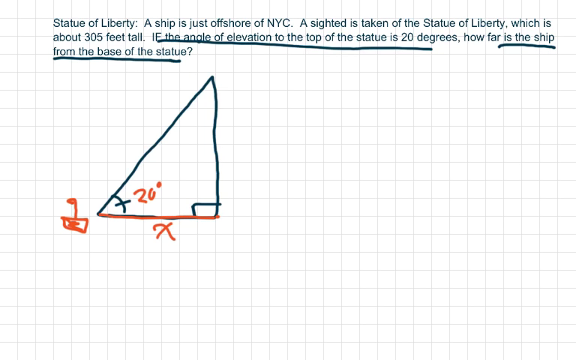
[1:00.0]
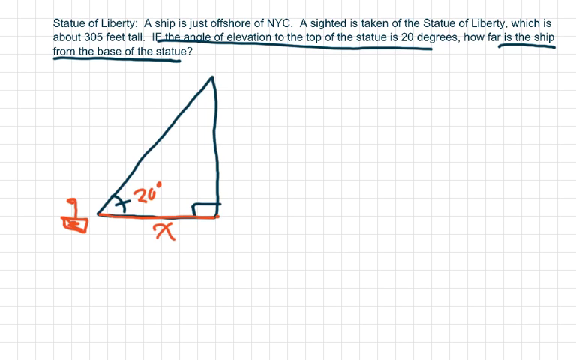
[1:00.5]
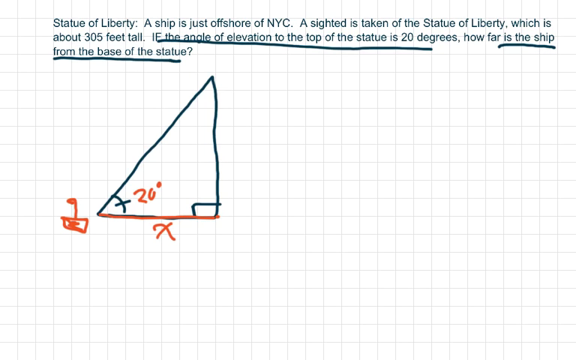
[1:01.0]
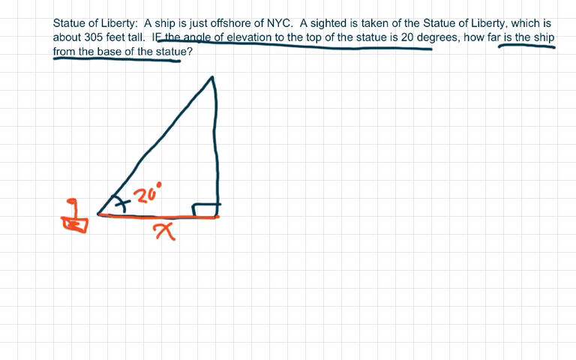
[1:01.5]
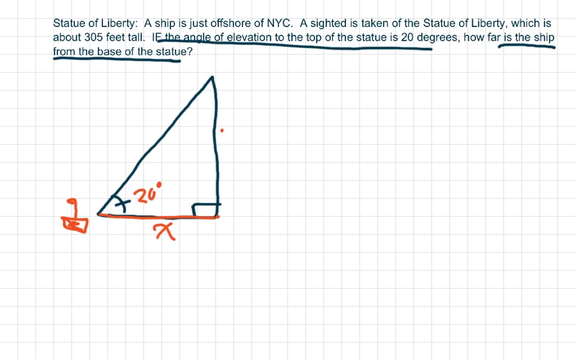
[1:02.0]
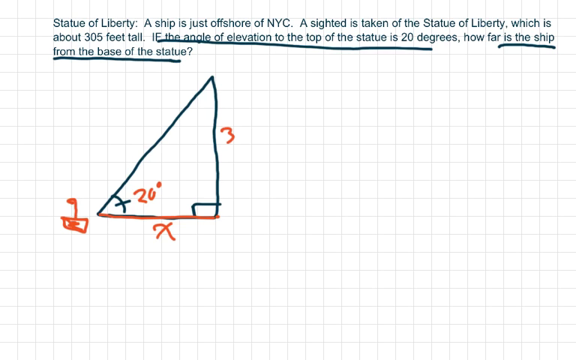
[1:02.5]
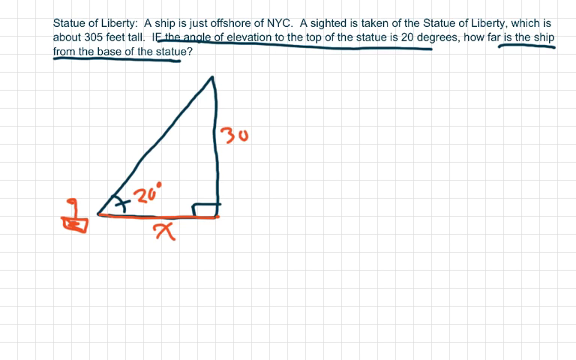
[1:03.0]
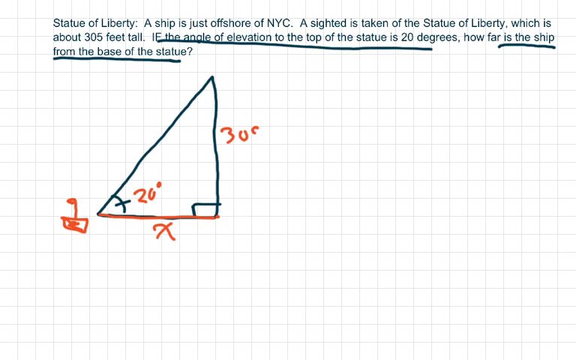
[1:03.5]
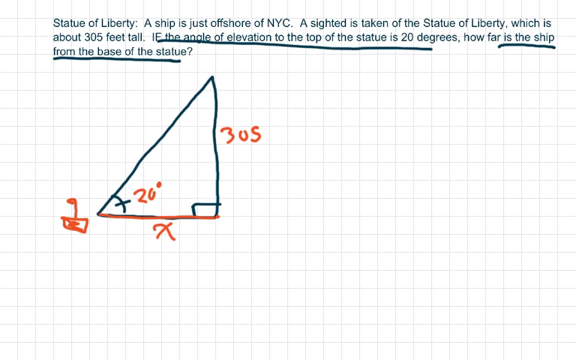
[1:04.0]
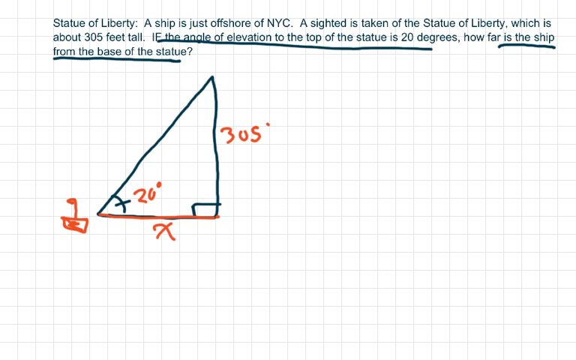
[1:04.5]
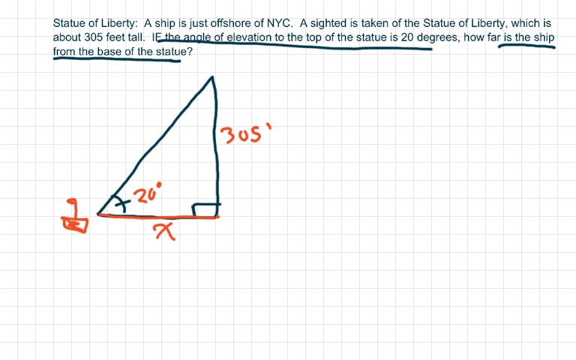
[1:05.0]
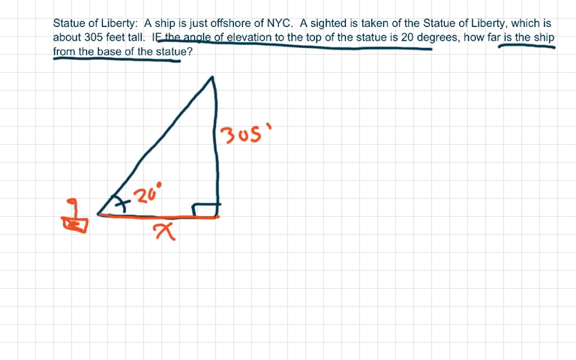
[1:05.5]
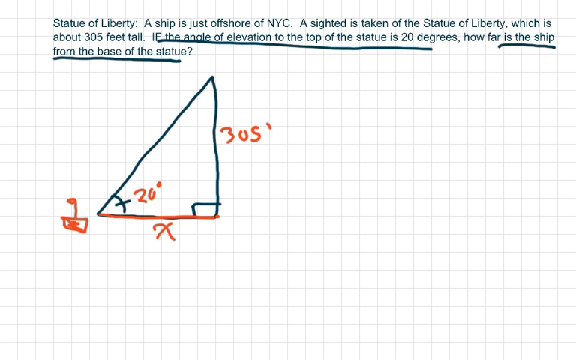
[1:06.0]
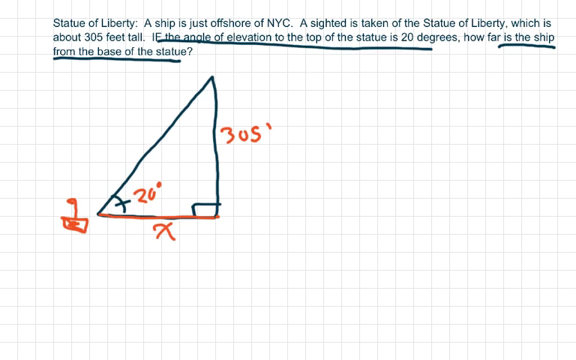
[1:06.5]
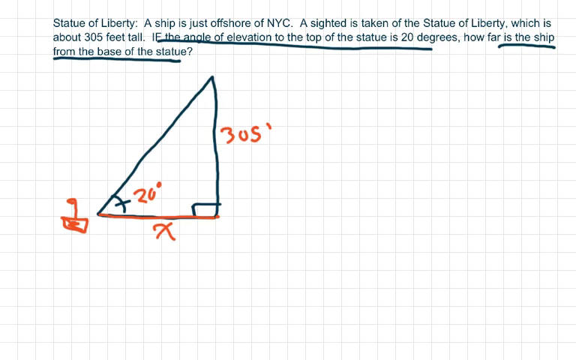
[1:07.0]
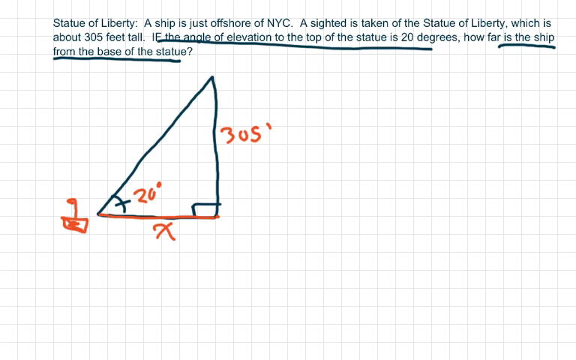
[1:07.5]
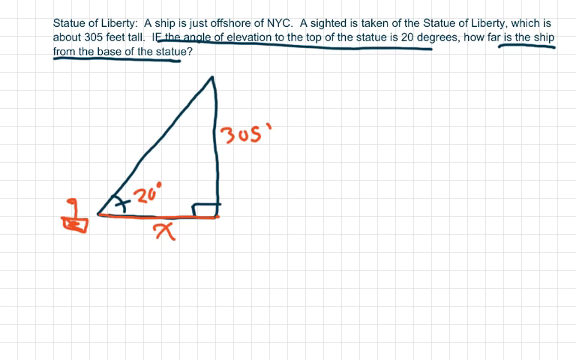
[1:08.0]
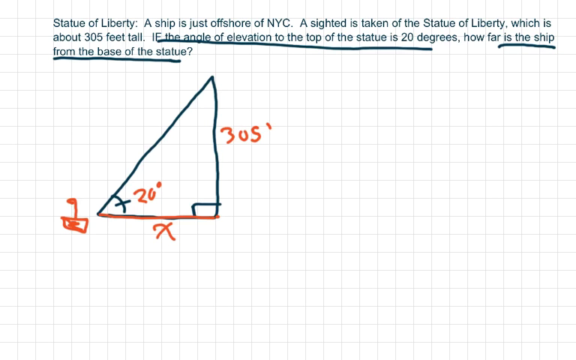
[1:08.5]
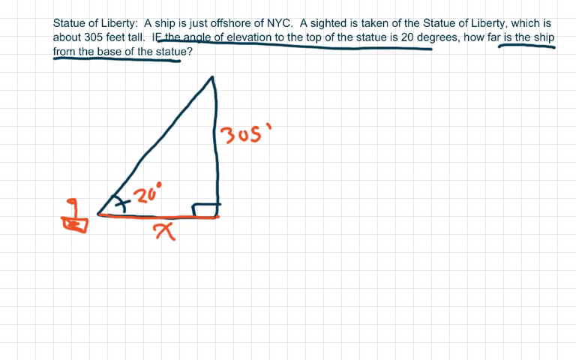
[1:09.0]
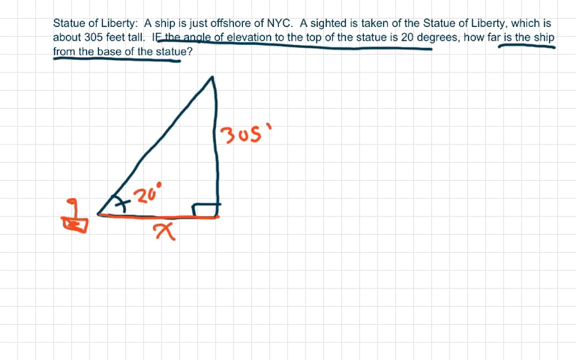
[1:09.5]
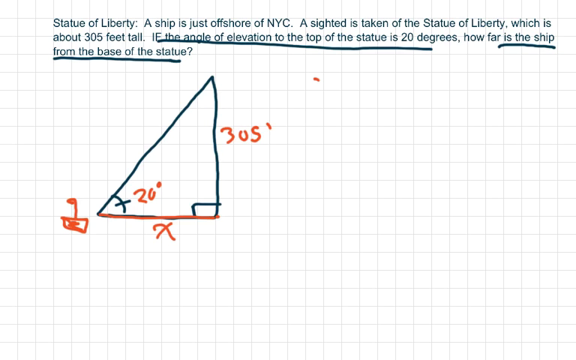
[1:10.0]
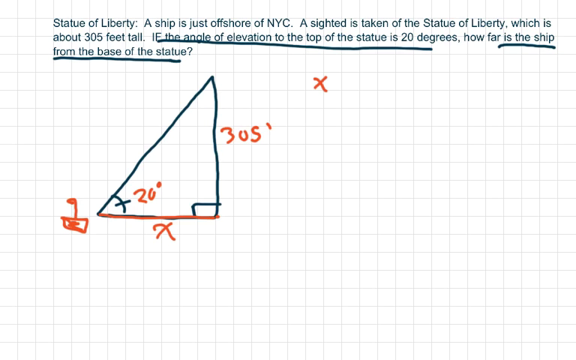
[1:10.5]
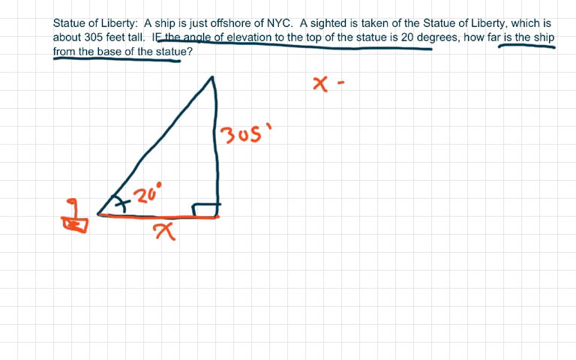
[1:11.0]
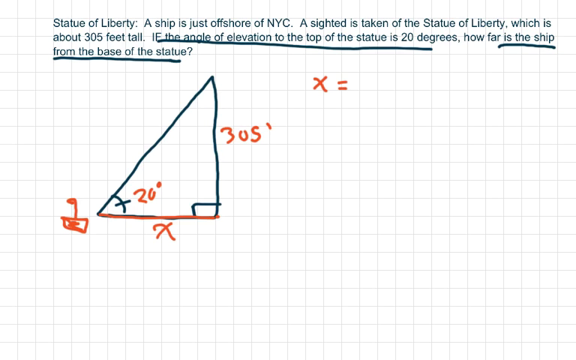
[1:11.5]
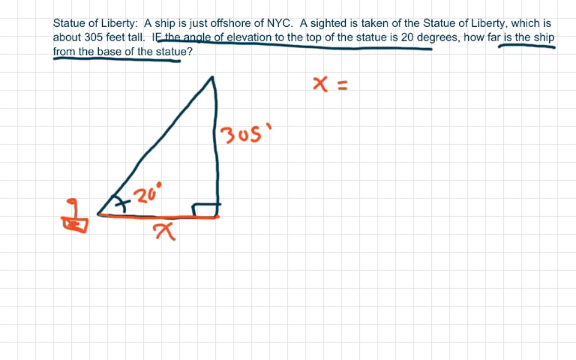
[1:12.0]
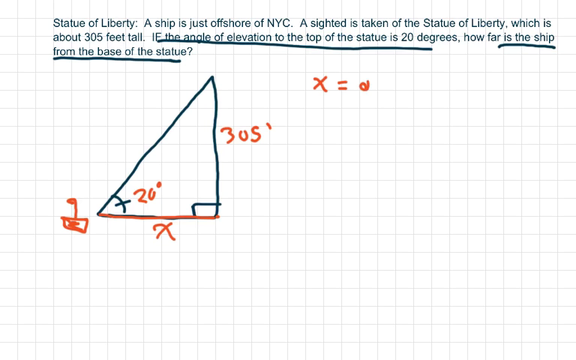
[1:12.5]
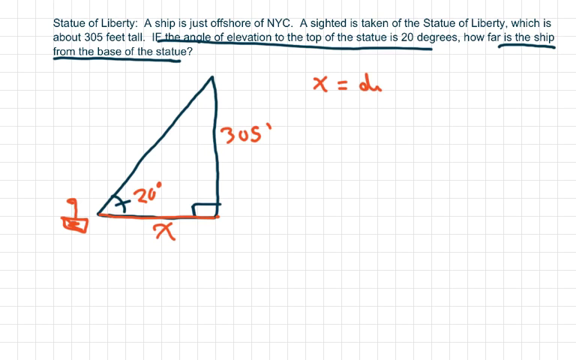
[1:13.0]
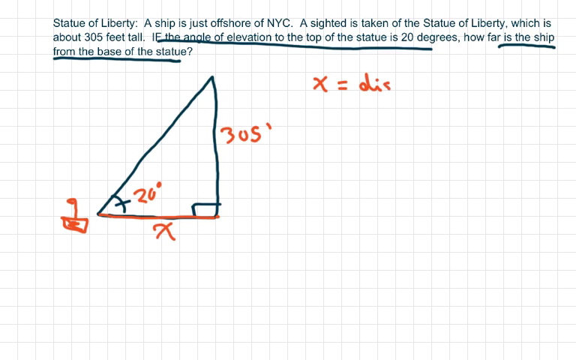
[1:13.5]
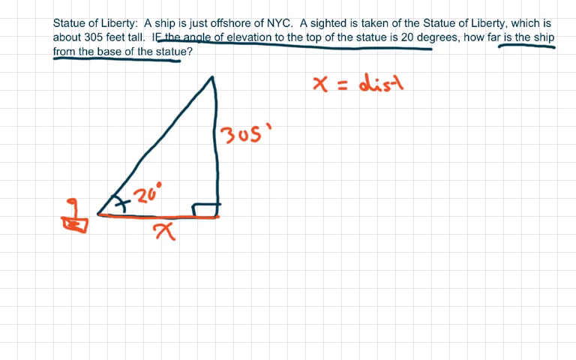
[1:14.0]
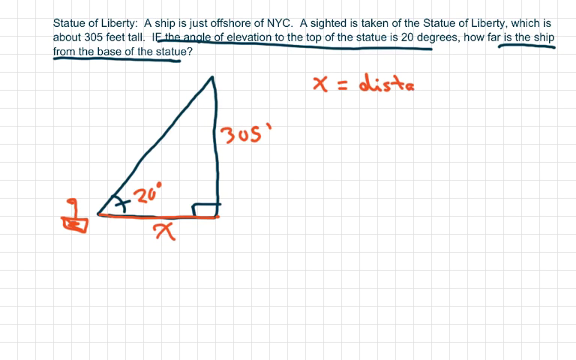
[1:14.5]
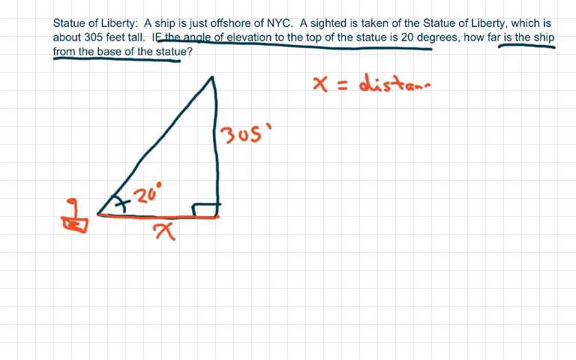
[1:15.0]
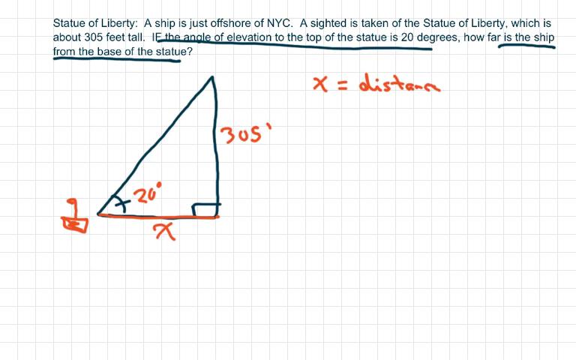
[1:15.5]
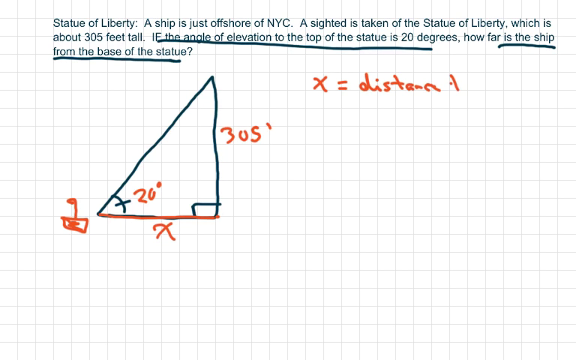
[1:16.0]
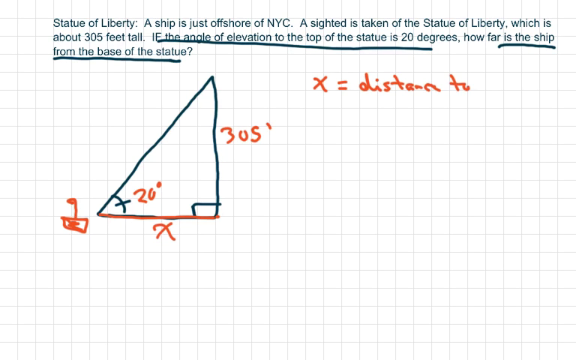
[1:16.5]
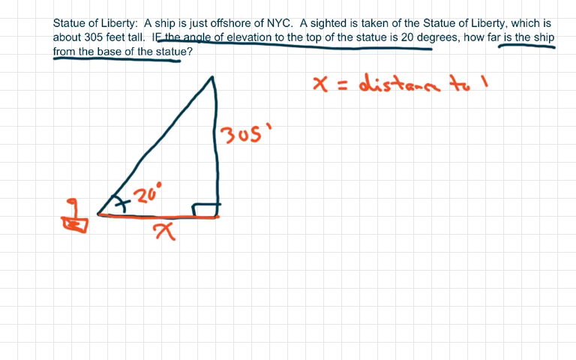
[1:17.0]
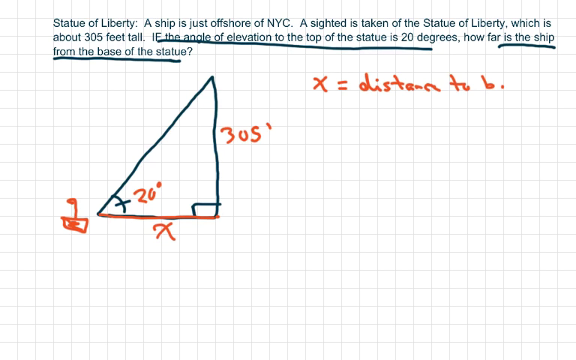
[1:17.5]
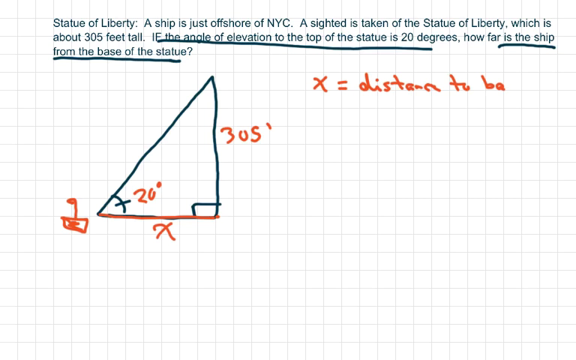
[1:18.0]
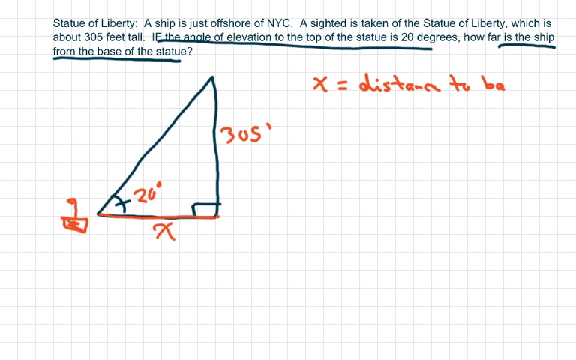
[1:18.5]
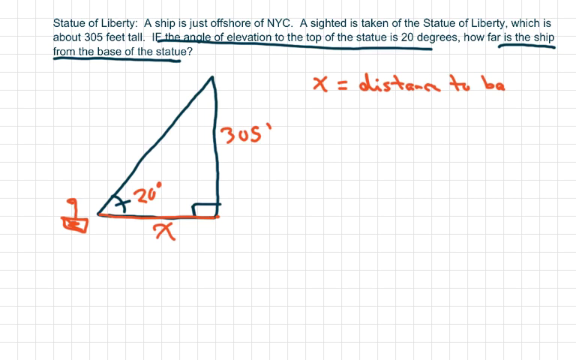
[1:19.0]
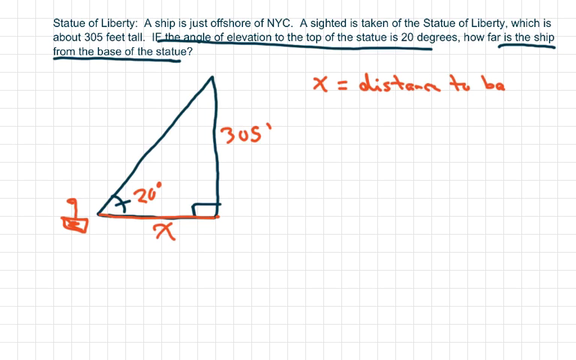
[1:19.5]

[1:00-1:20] The background looks like white graphing paper with small squares. At the top, a word problem in dark bluish green text reads "Statue of Liberty: A ship is just offshore of NYC. A sighted is taken of the Statue of Liberty which is about 305 feet tall. If the angle of elevation to the top of the statue is 20 degrees, how far is the ship from the base of the statue?" The last question in the word problem is underlined. Underneath is a triangle whose bottom right corner is a 90 degree angle and whose bottom left corner has a curved line with a dash in it, with "20 degrees" in red numbers next to it. A red line is drawn over the bottom side of the triangle, and a red X is underneath it, outside the triangle. To the left of the bottom left angle marked 20 degrees is a simply drawn sailboat in red marker. Then "305'" is written in red marker next to the right side of the triangle, and to the right of that, also in red marker, the text "x = distance to BA--" is written.